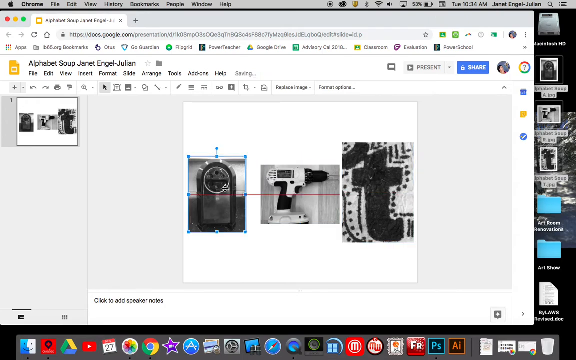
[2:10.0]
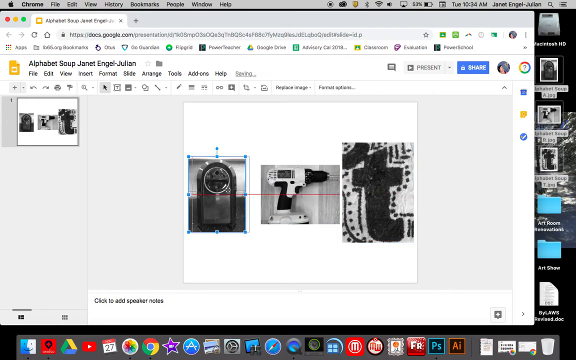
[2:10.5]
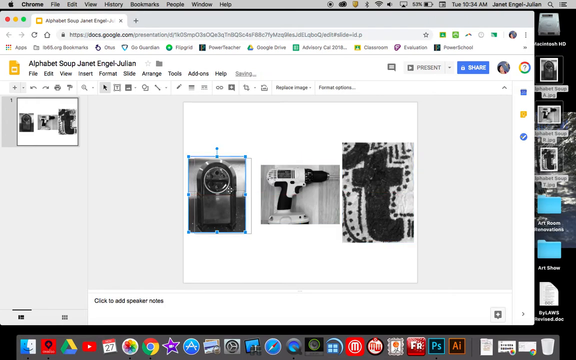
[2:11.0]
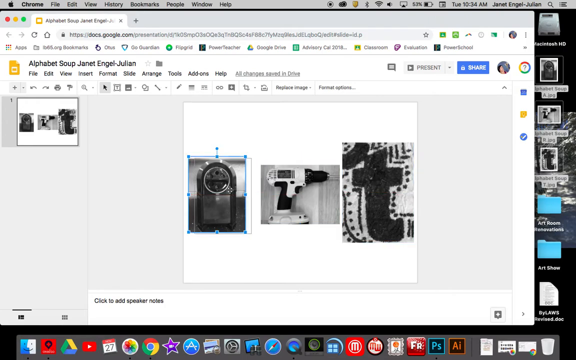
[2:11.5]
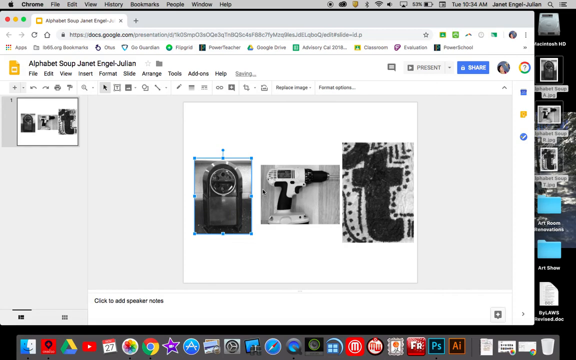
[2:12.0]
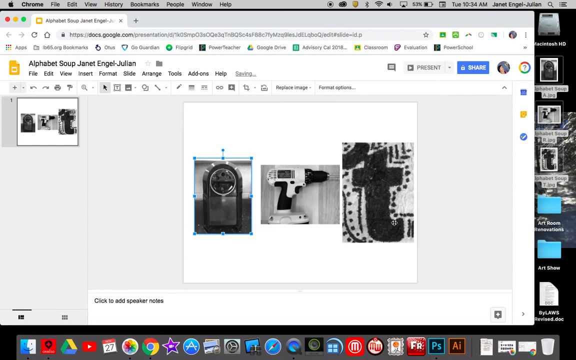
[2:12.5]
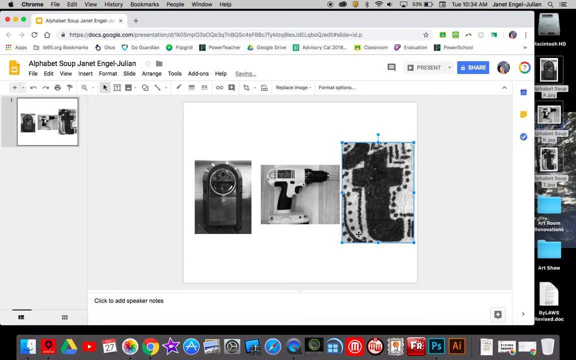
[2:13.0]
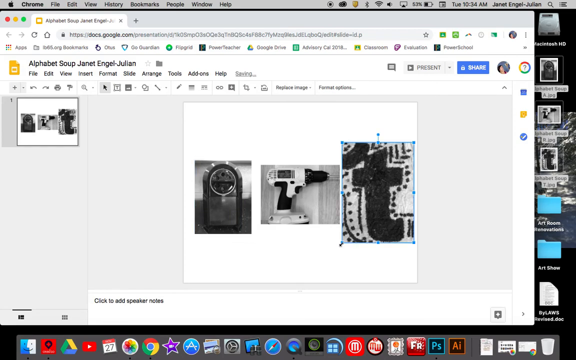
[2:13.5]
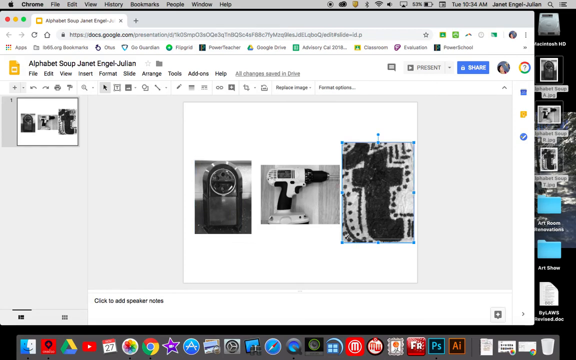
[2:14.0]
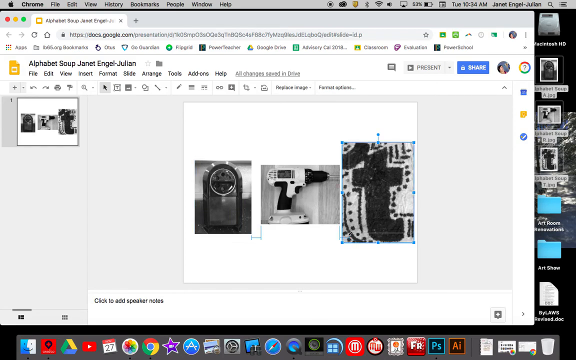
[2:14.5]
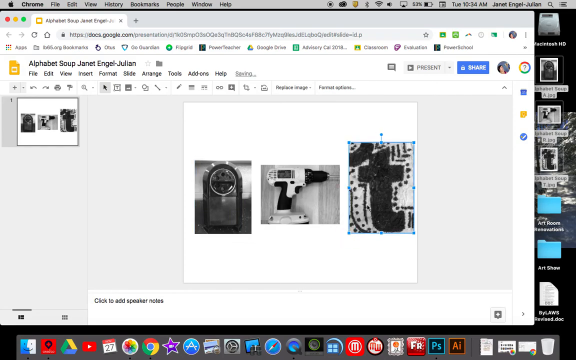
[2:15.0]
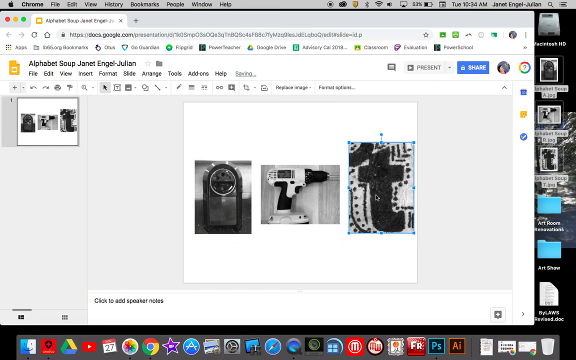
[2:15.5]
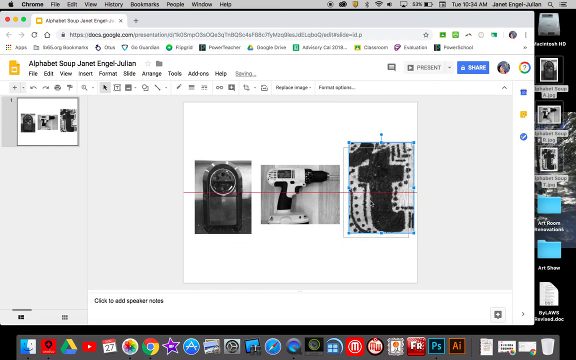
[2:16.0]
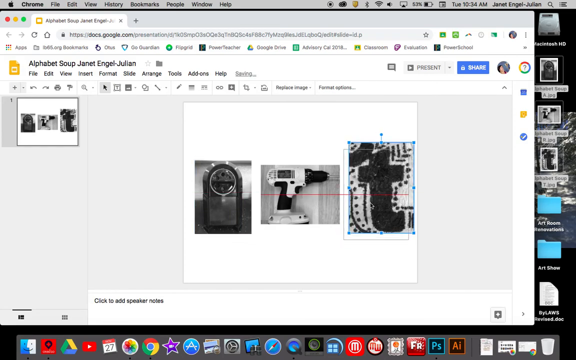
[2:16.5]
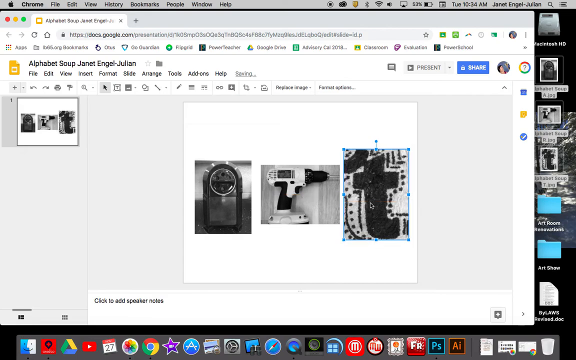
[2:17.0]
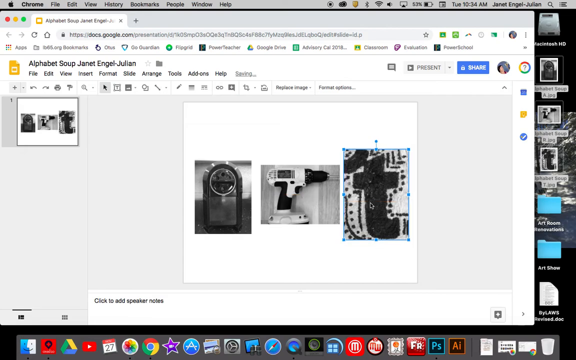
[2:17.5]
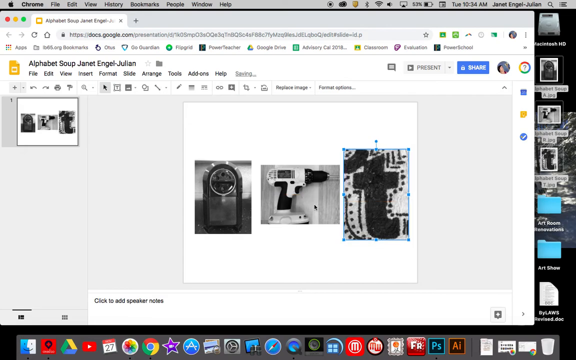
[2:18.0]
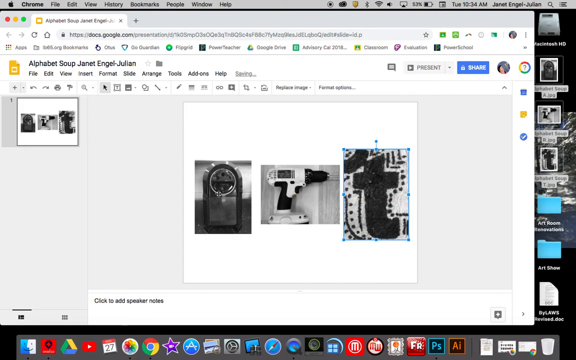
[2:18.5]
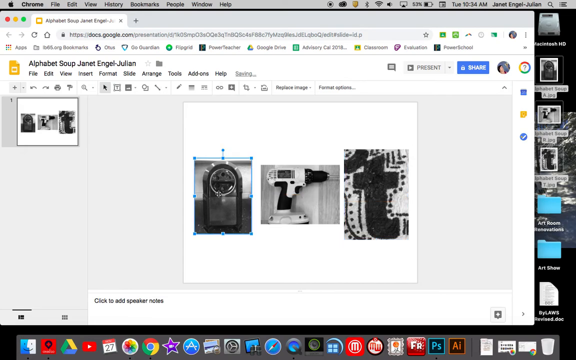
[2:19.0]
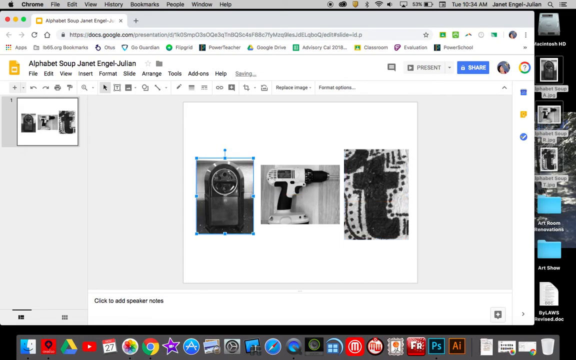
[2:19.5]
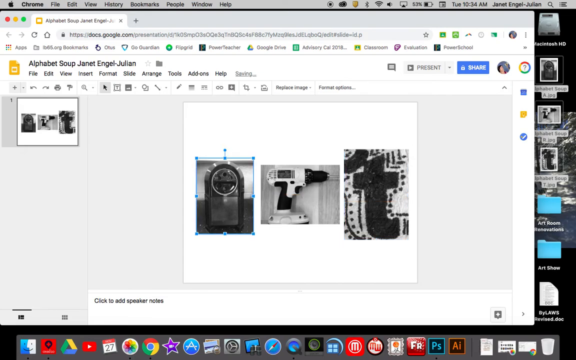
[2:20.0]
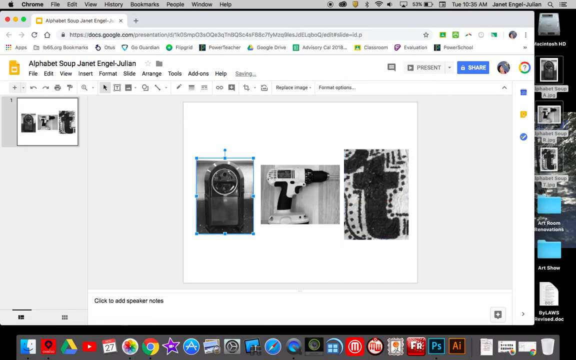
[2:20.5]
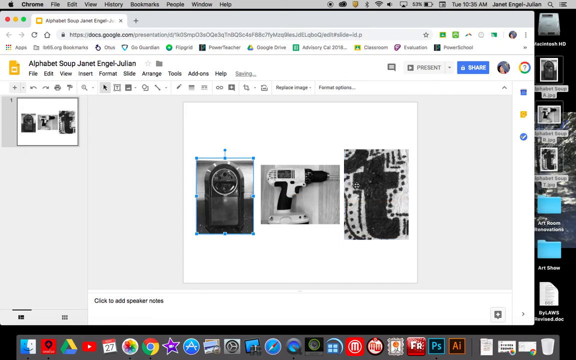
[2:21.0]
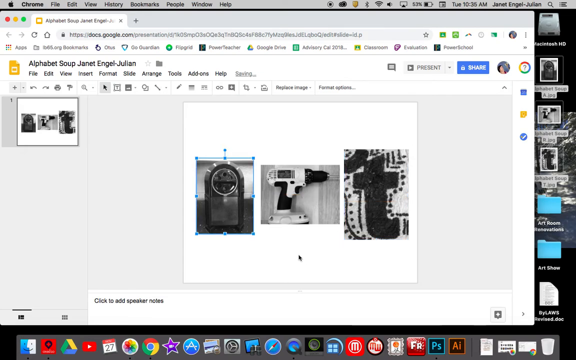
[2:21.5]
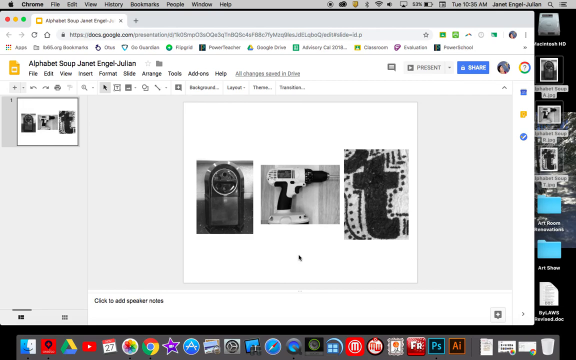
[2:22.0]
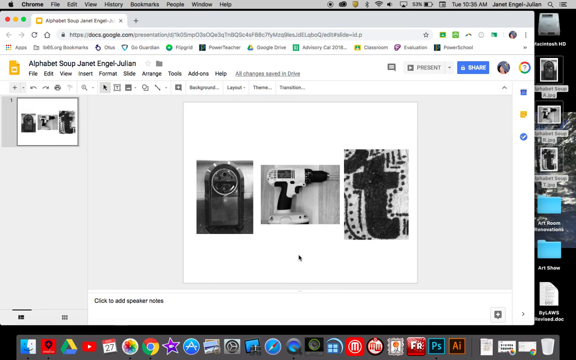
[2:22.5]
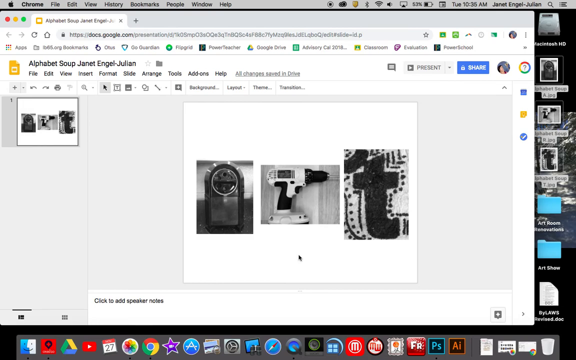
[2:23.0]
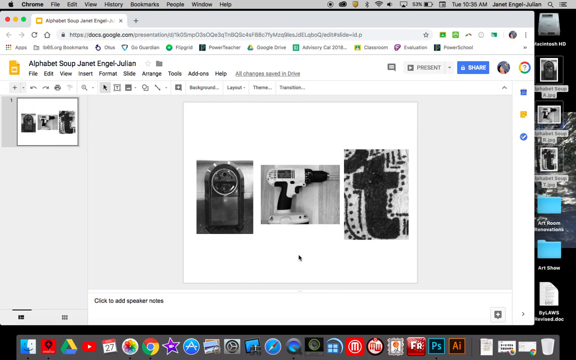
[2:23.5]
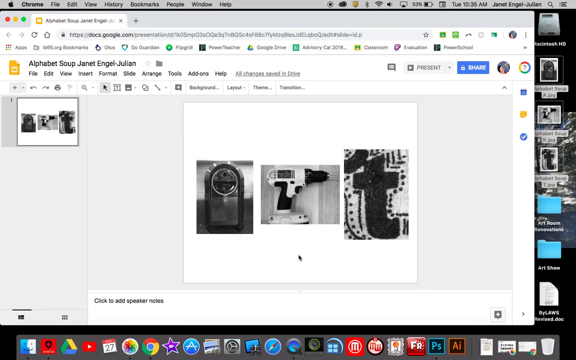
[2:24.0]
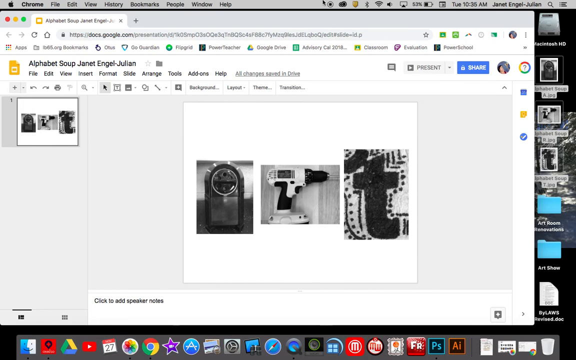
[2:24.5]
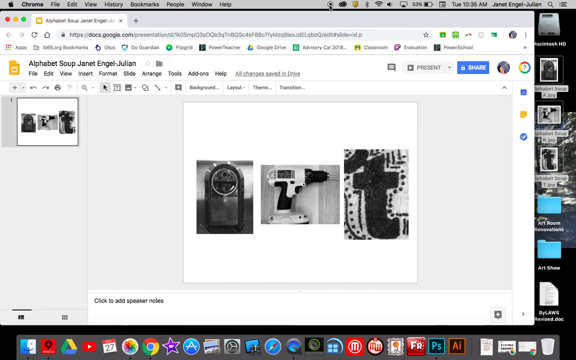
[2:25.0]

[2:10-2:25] Google Chrome on a Windows device shows Google Docs with a piece titled "Alphabet Soup, Jeanette Engel, Julian". Three images are next to each other, all in line, as indicated by a horizontal red line through the middle of all of them. The first image on the left has a light blue box around it, showing it is selected. The user drags it slightly to the right, then moves over the third image, clicks it, clicks its bottom right corner and moves the mouse upward and left slightly to resize it. The user clicks the image and drags it down and to the left slightly, trying to center it properly with the other images. The user moves back left and clicks the first image; the blue box disappears from the third image and appears over the first. The user drags it very slightly to the right, then clicks on the white part of the screen, which removes the light blue border from all the images. Finally the user moves the mouse to the top of the screen and clicks what appears to be a stop recording button, a little black circle with a thinner black circle around it, at the very top of the screen along what appears to be an information bar showing things like the battery, the time and the user's name.